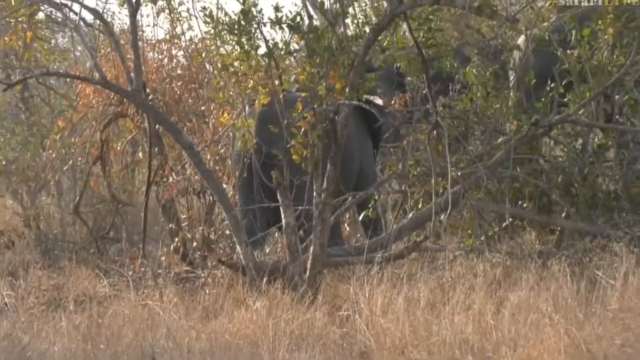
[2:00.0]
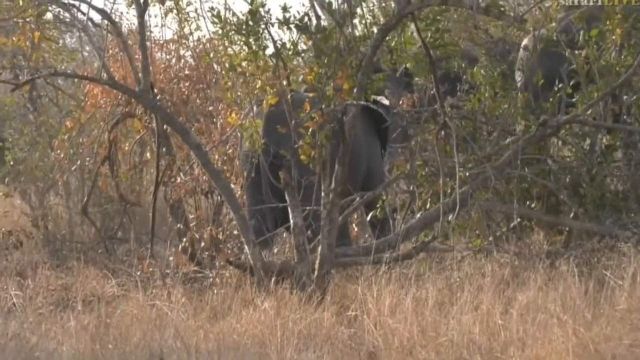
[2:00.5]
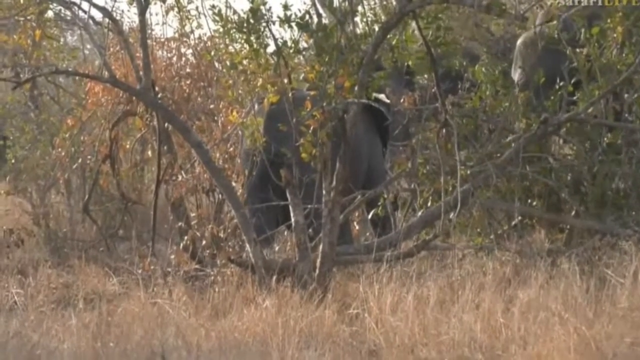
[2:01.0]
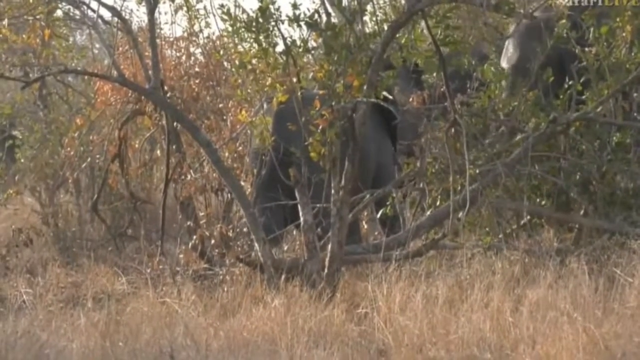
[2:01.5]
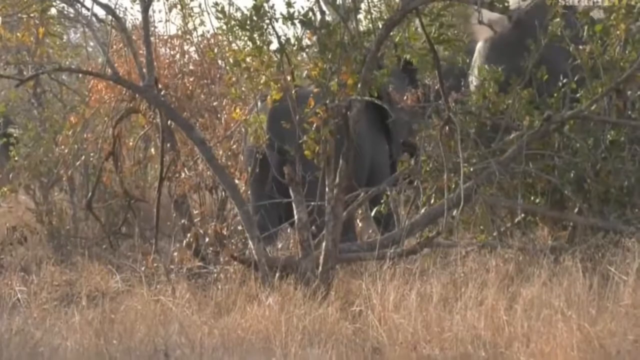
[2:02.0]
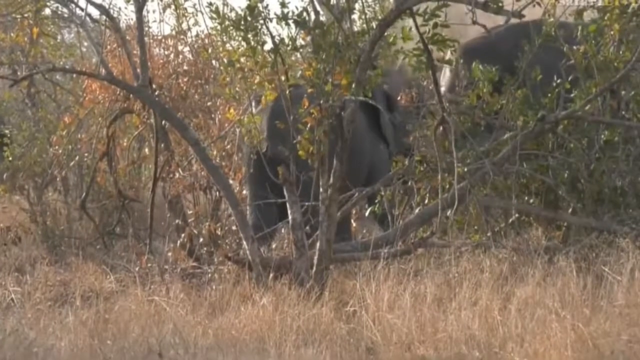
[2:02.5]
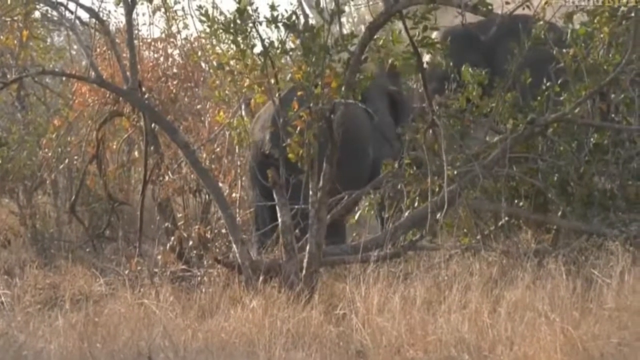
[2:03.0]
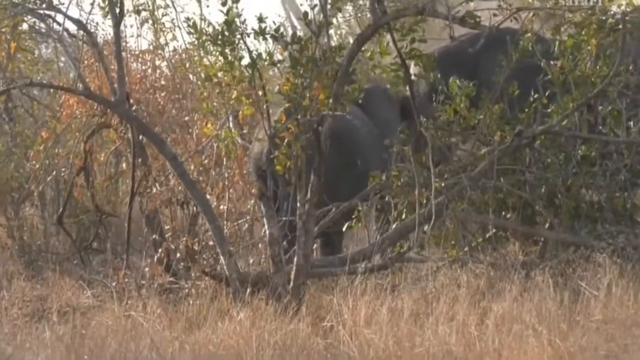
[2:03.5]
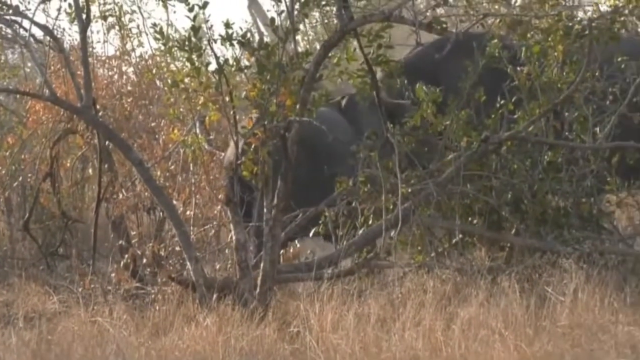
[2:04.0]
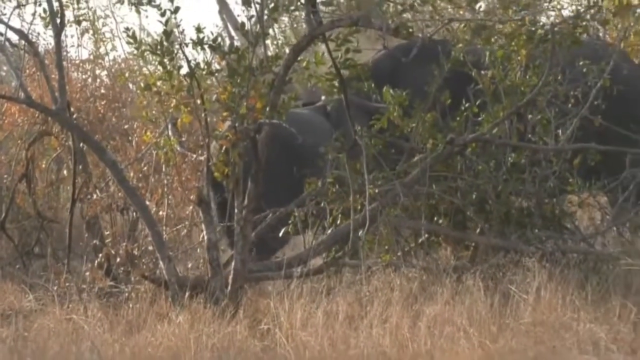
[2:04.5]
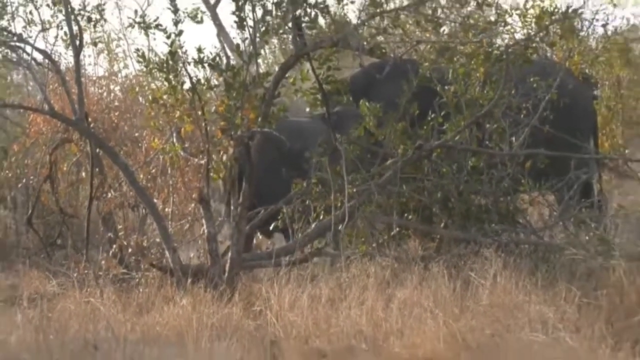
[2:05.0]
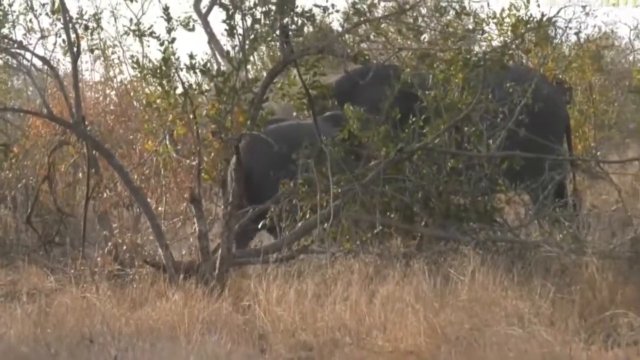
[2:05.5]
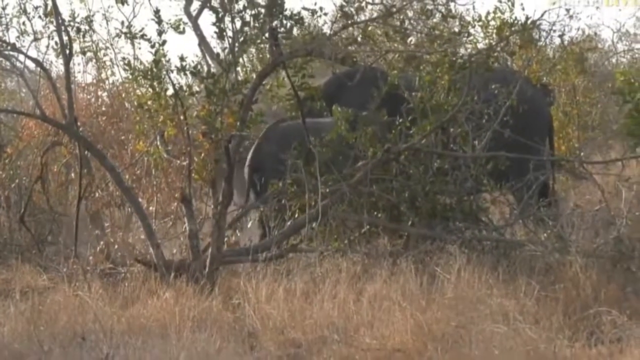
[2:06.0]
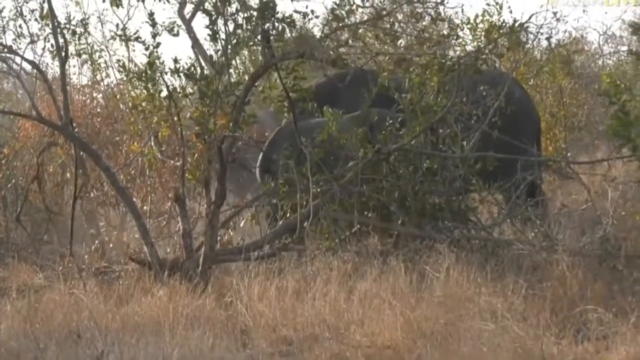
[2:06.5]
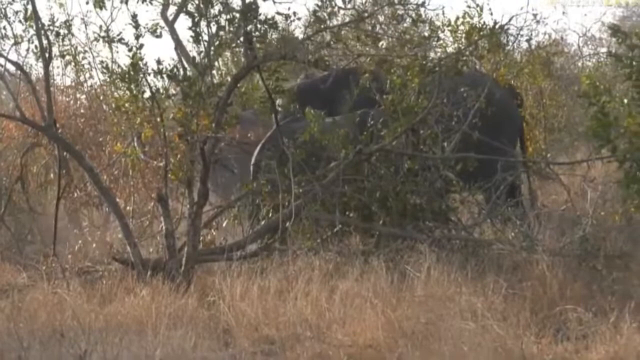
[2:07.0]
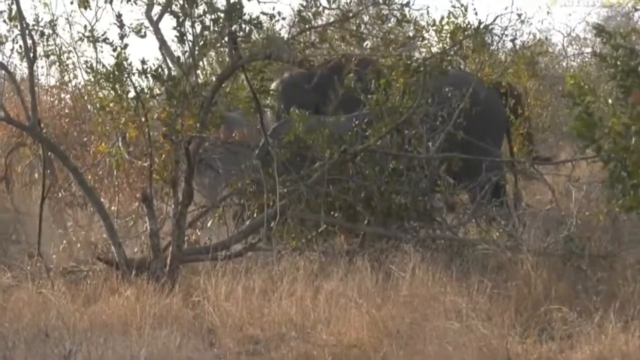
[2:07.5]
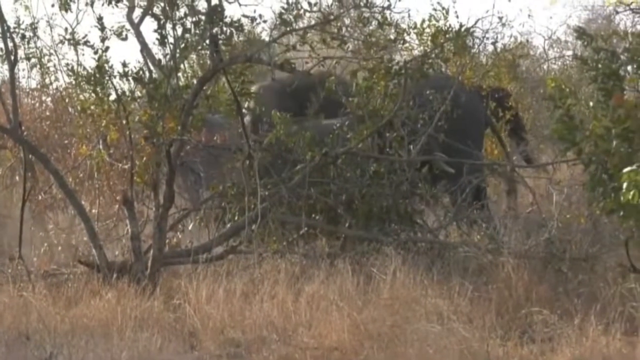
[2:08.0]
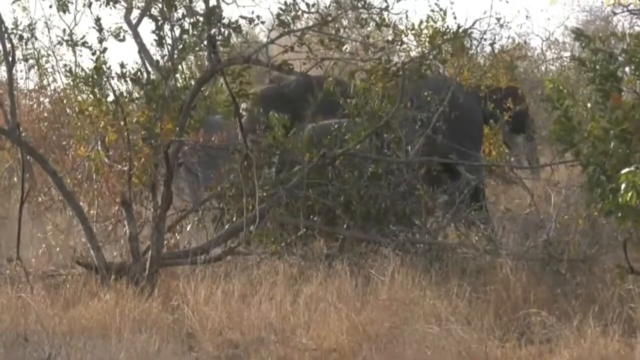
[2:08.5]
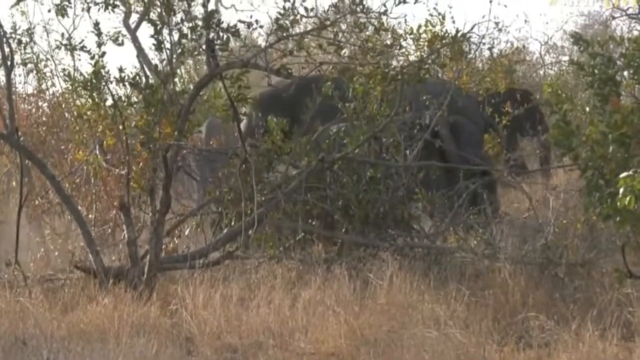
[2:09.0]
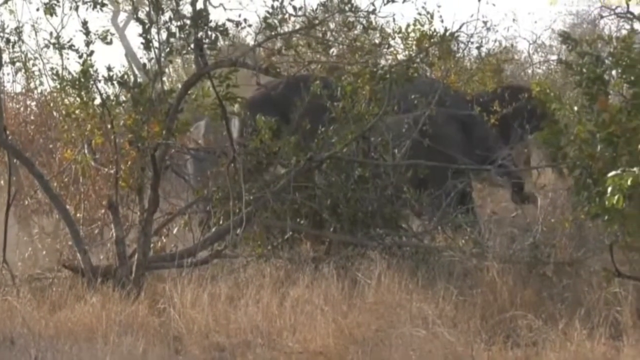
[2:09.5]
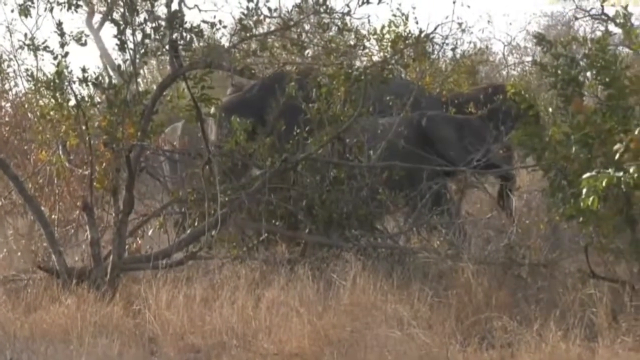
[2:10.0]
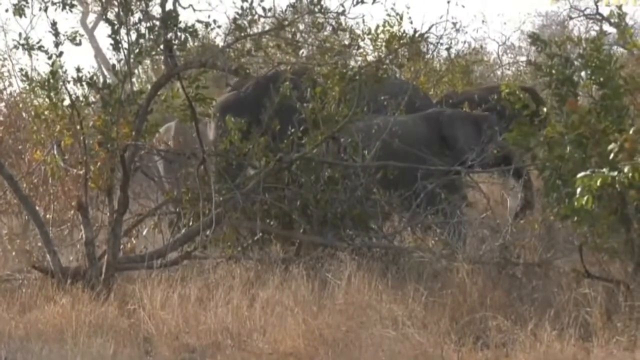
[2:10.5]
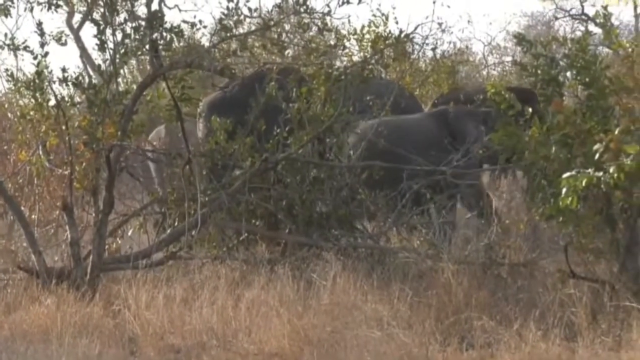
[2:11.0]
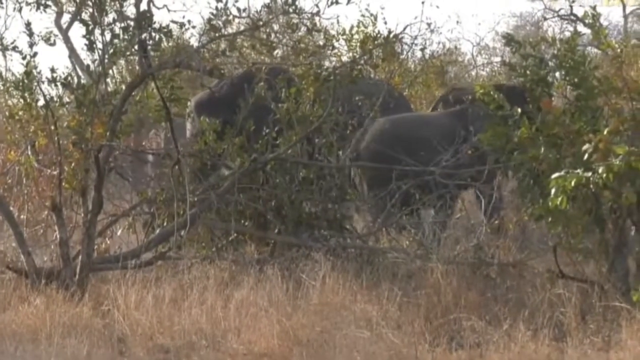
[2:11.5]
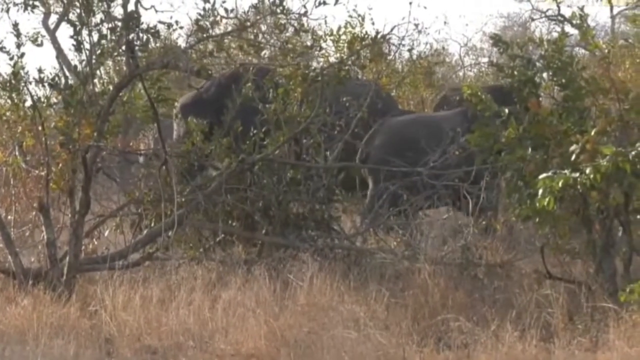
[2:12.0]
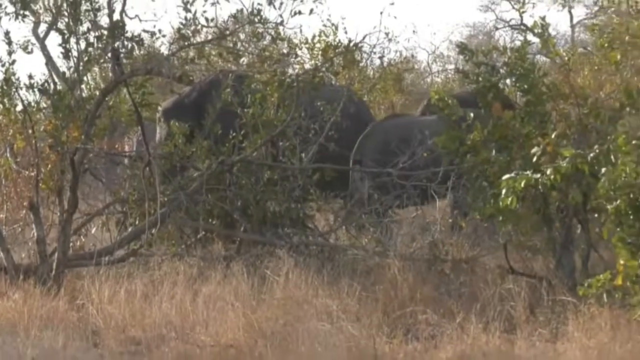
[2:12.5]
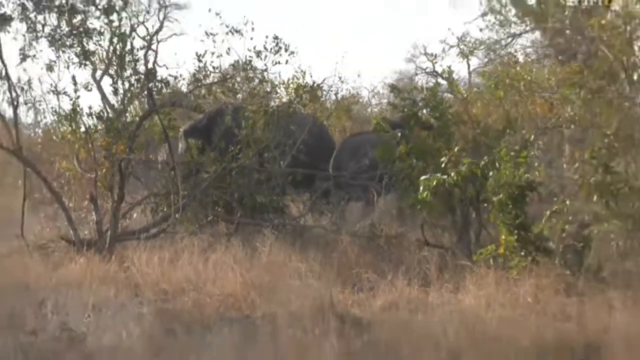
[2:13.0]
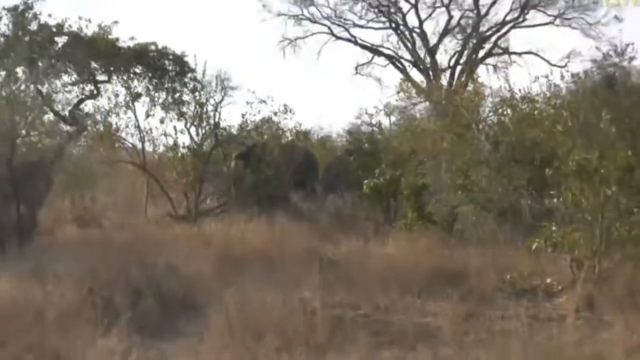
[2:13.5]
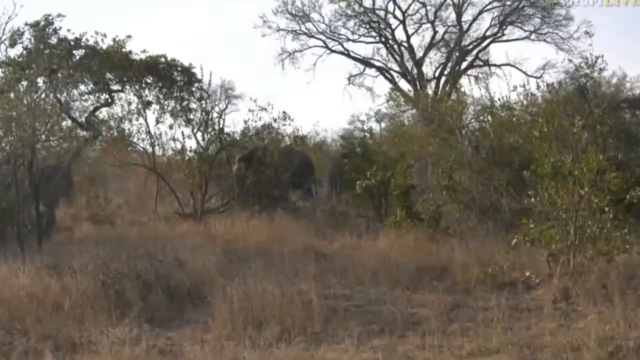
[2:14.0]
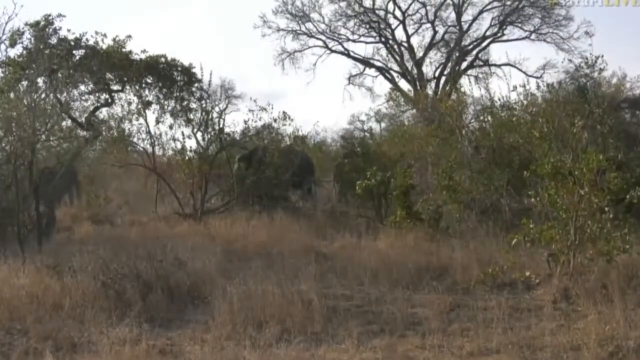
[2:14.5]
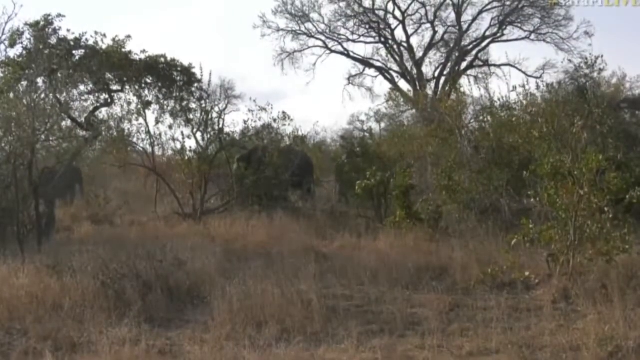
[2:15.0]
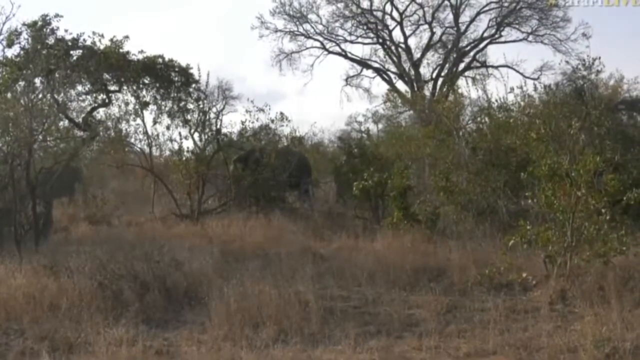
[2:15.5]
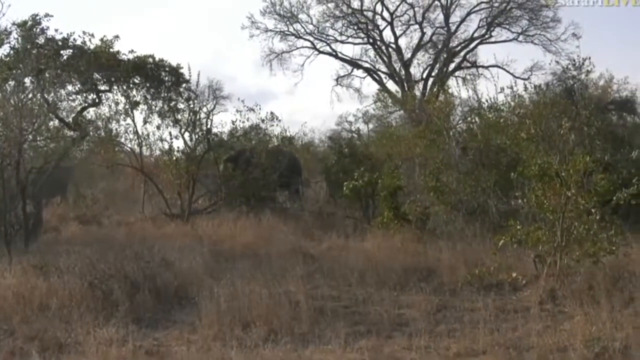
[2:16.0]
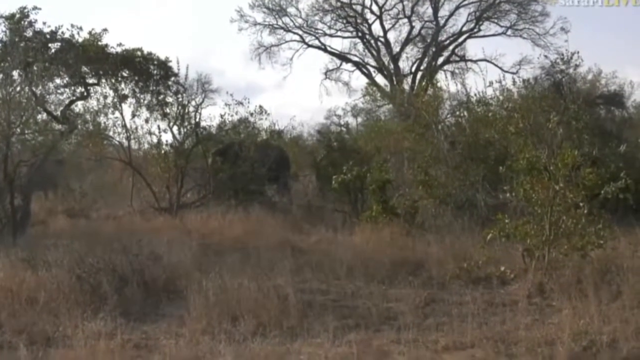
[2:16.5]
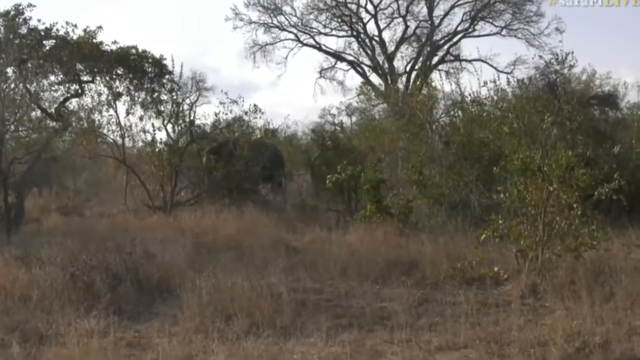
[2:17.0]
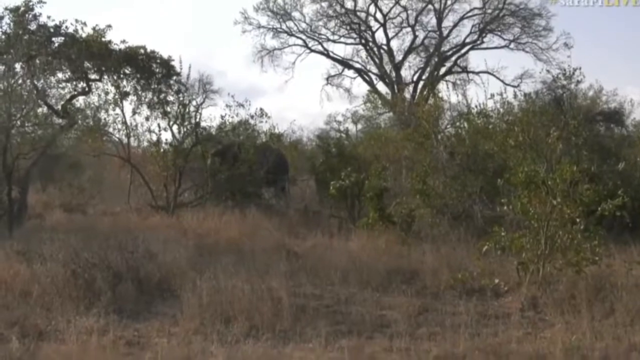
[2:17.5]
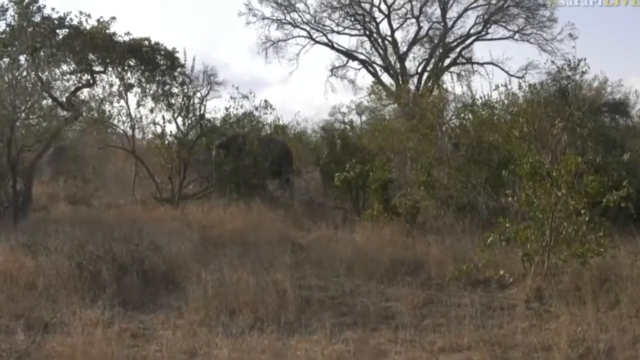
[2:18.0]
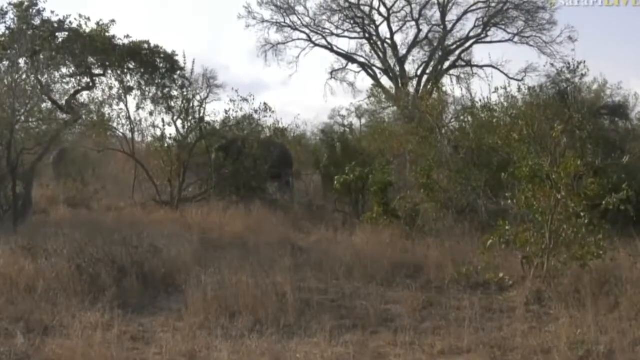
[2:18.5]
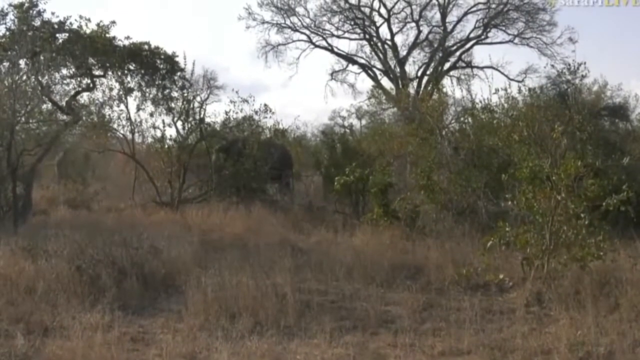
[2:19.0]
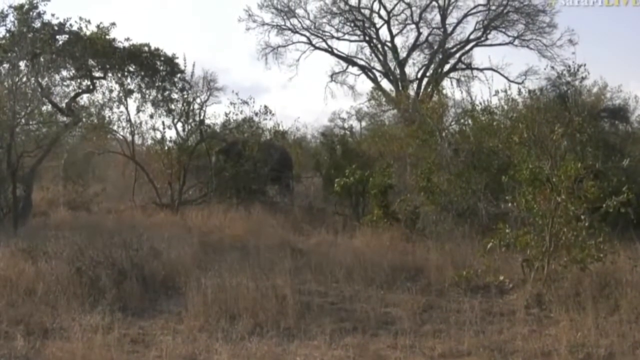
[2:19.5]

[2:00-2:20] The elephants are eating, and the camera seems focused on one particular family of elephants that is closer. Other elephants are in different areas that the camera had panned around. The camera is some distance away and magnifies the group closely without losing much definition. The animals are not bothered and continue eating. They are behind a brush of branches and trees. When the camera pulls back, one large tree is visible with almost no vegetation on it. The animals are near the branches, possibly seeking a little shade.